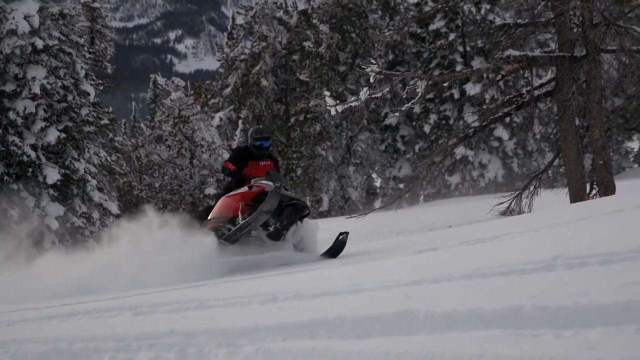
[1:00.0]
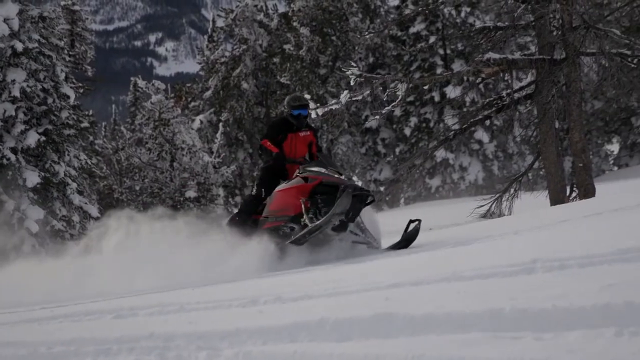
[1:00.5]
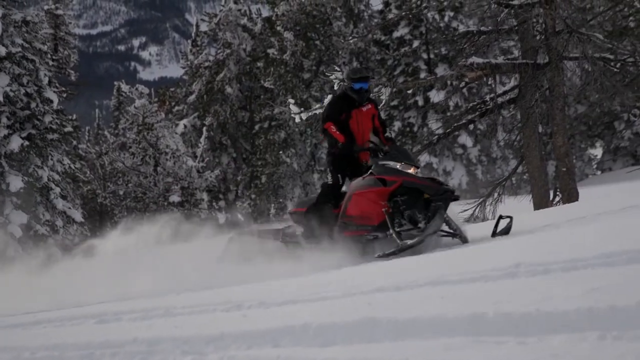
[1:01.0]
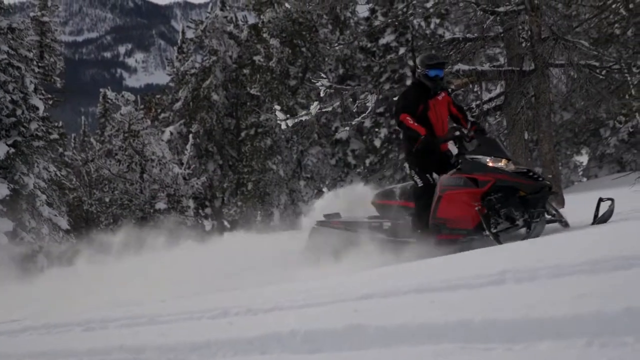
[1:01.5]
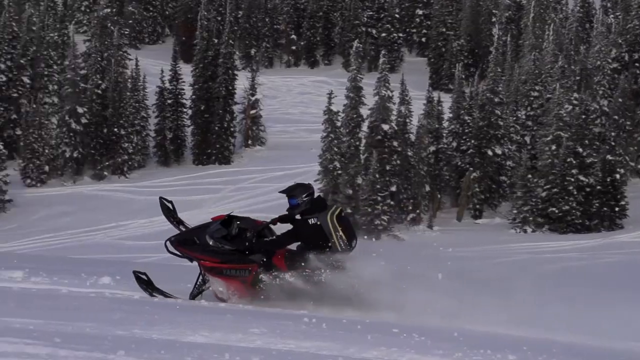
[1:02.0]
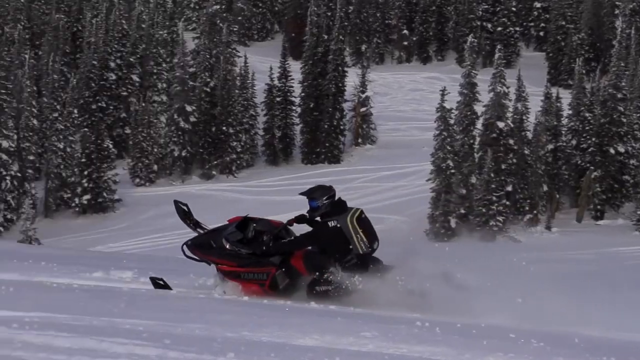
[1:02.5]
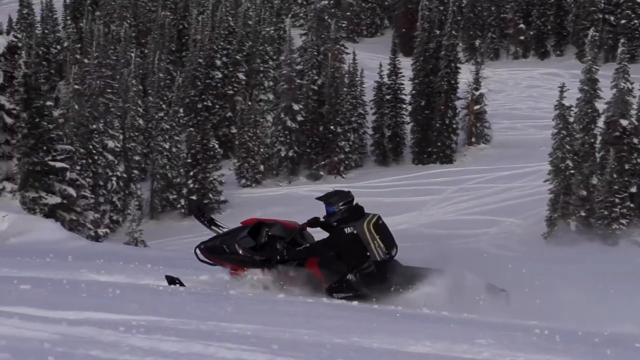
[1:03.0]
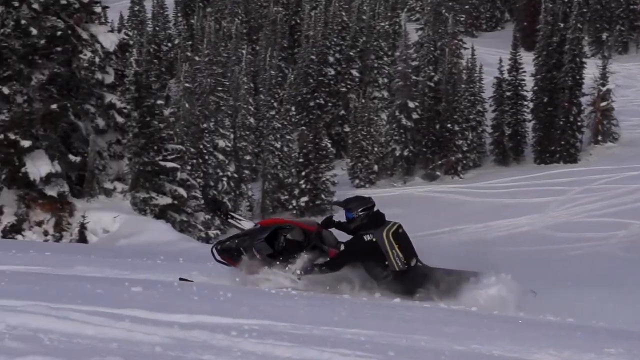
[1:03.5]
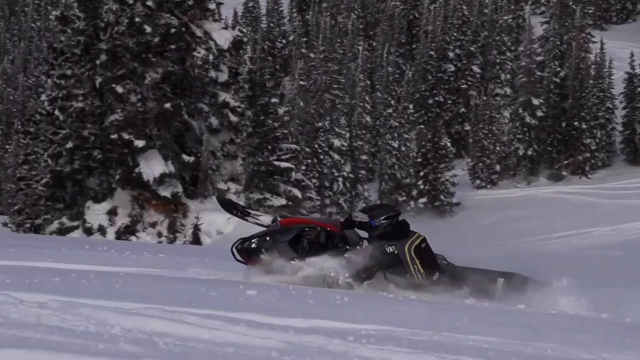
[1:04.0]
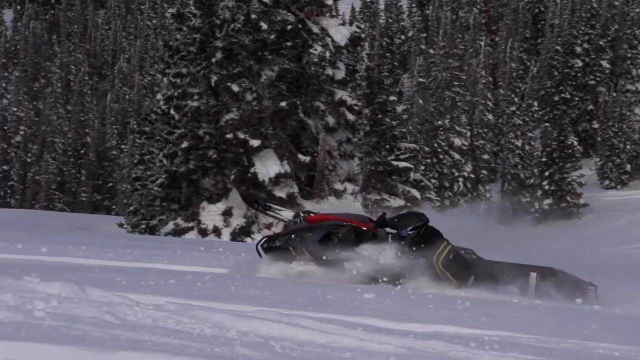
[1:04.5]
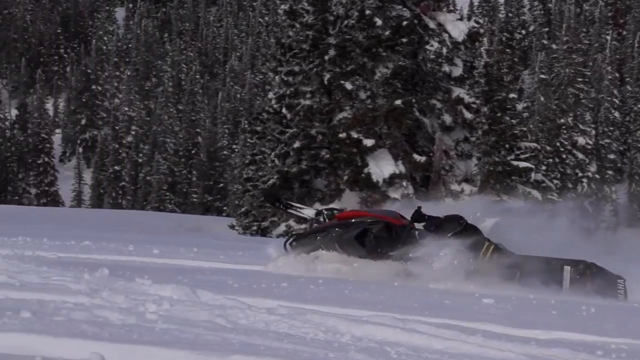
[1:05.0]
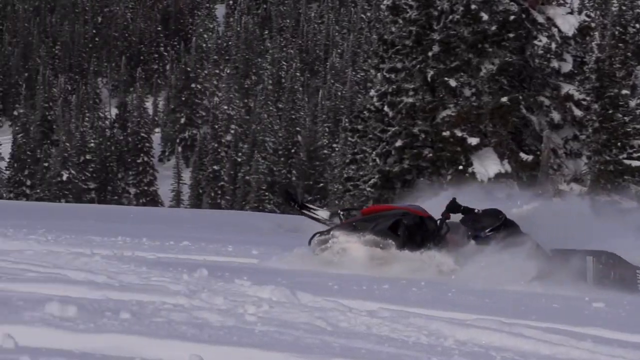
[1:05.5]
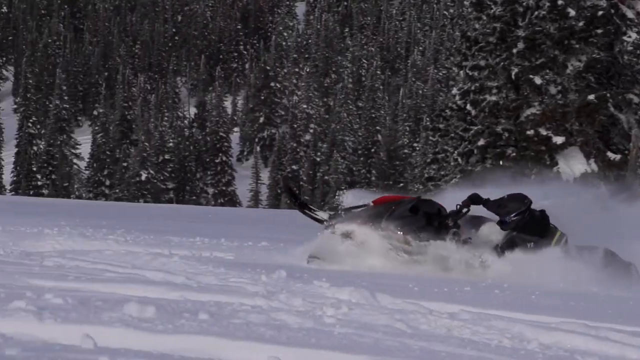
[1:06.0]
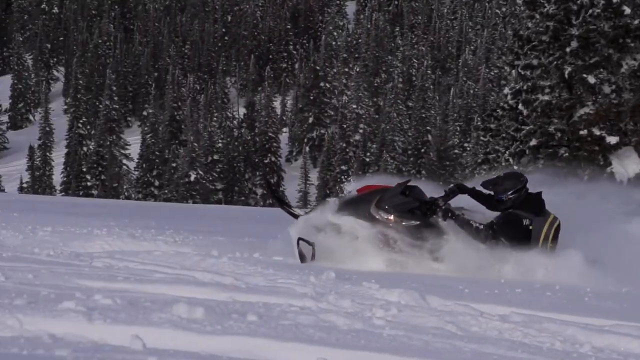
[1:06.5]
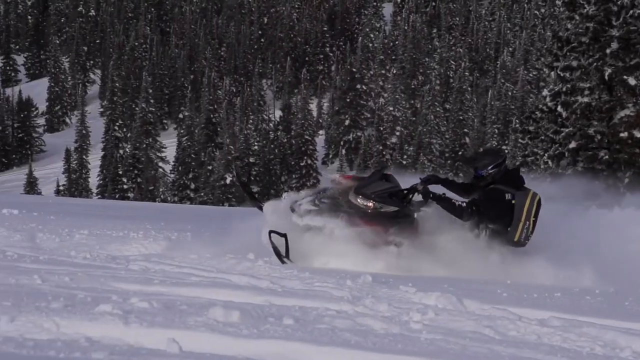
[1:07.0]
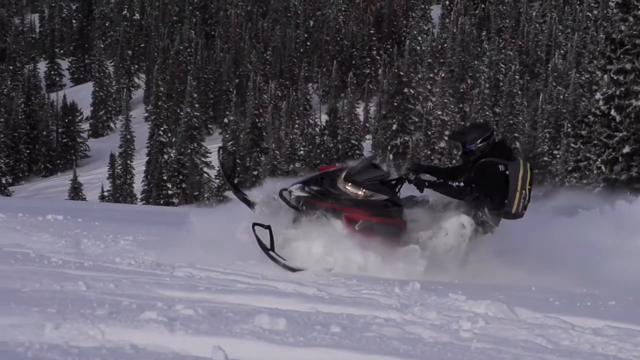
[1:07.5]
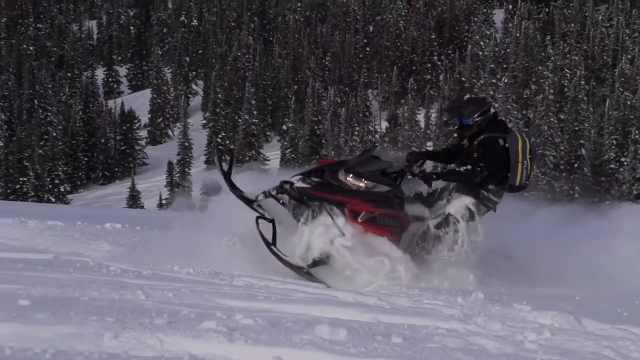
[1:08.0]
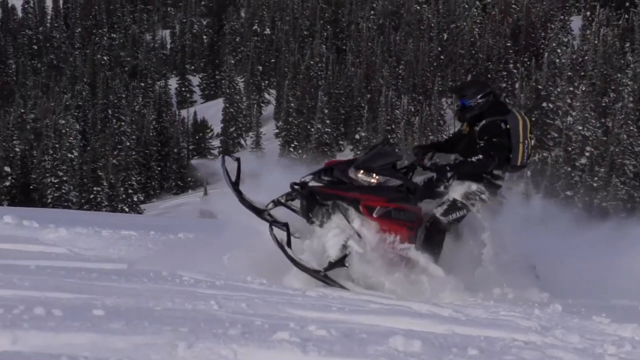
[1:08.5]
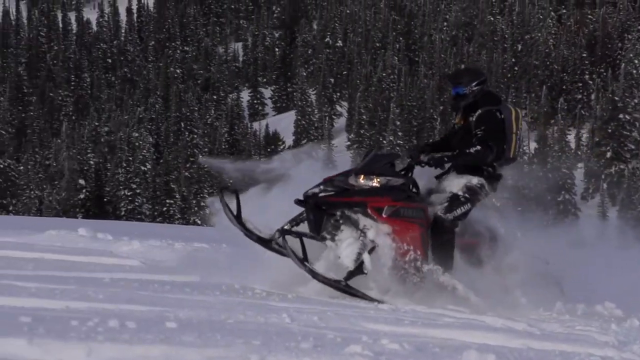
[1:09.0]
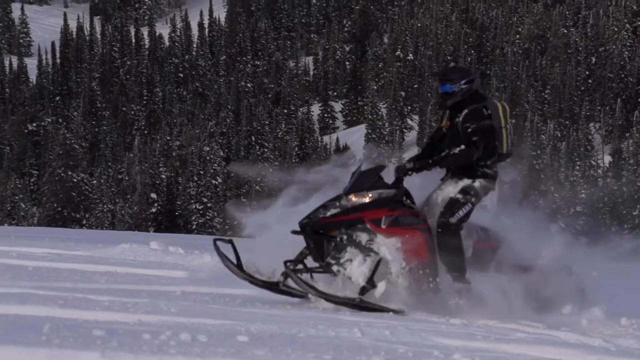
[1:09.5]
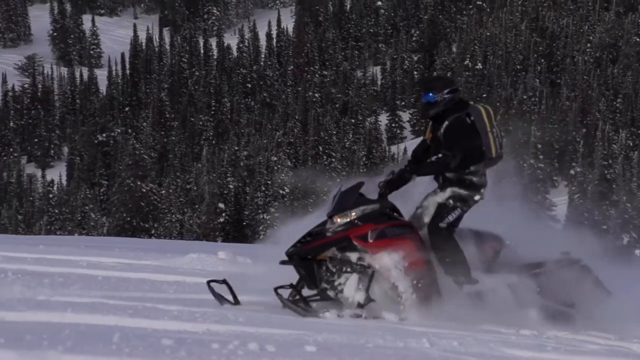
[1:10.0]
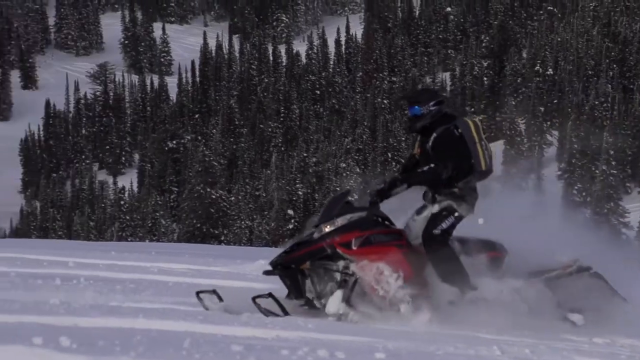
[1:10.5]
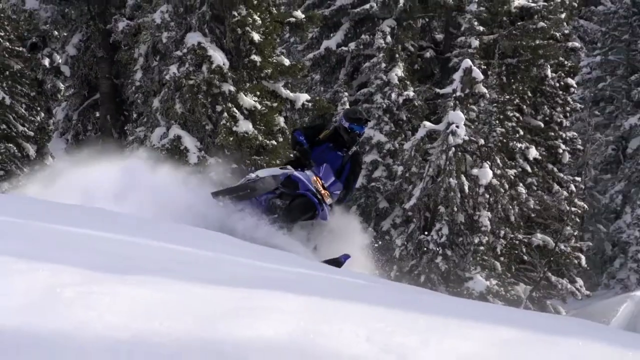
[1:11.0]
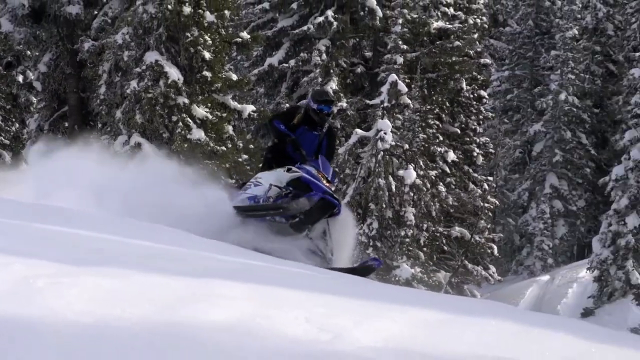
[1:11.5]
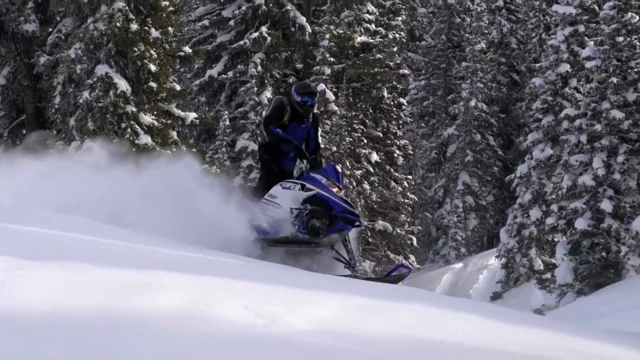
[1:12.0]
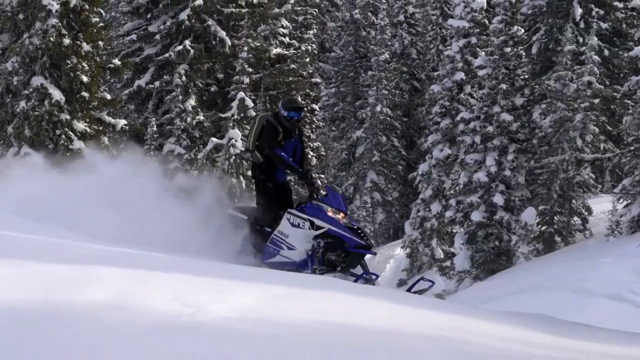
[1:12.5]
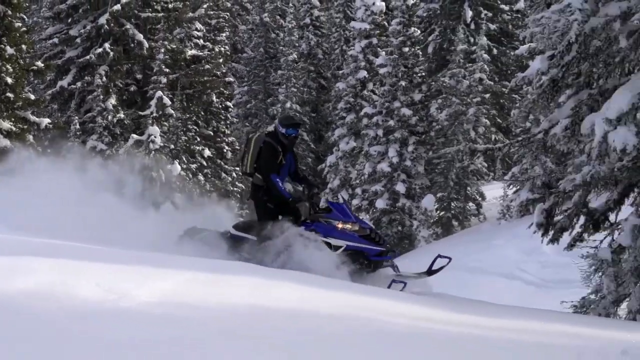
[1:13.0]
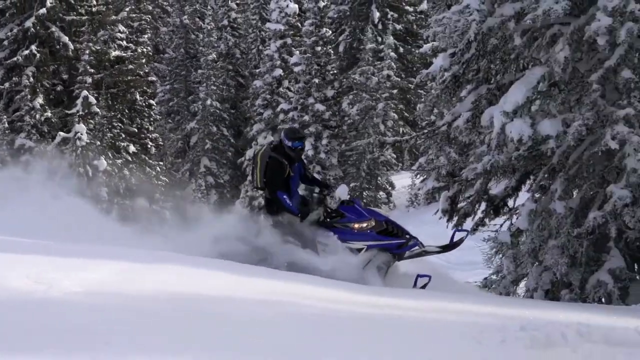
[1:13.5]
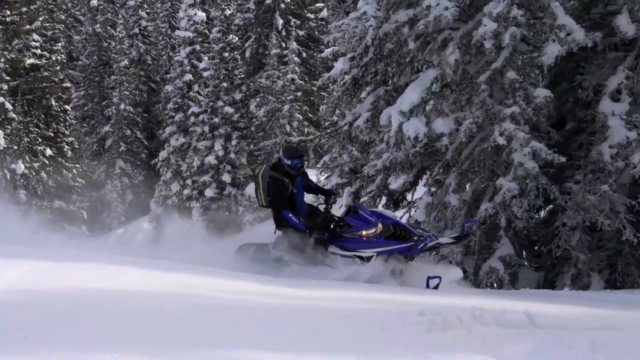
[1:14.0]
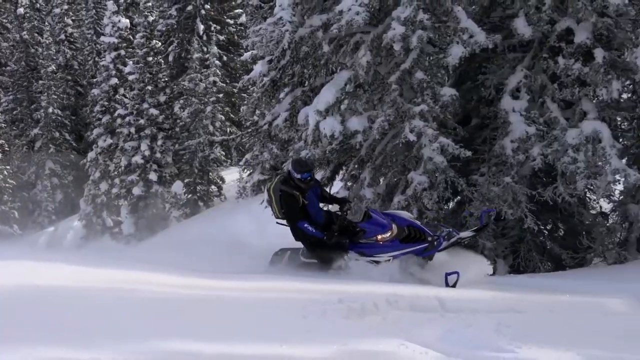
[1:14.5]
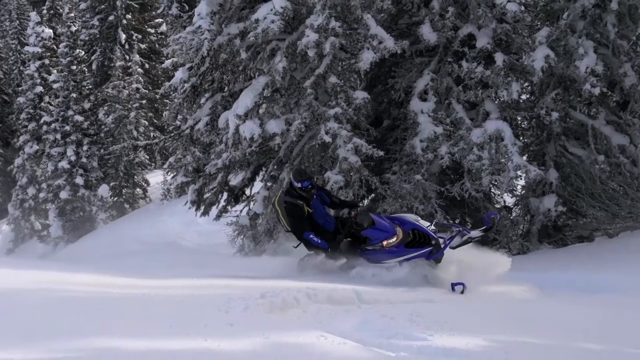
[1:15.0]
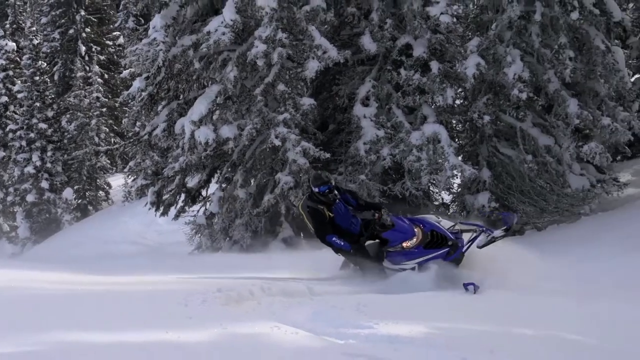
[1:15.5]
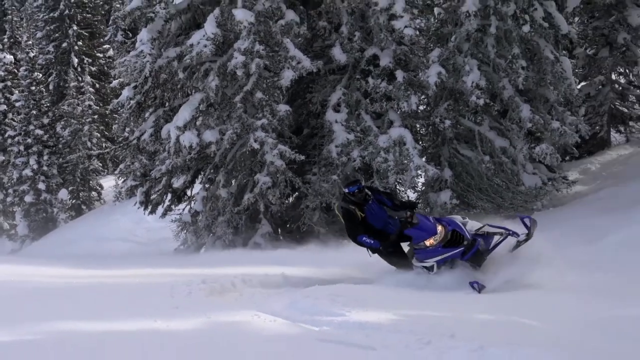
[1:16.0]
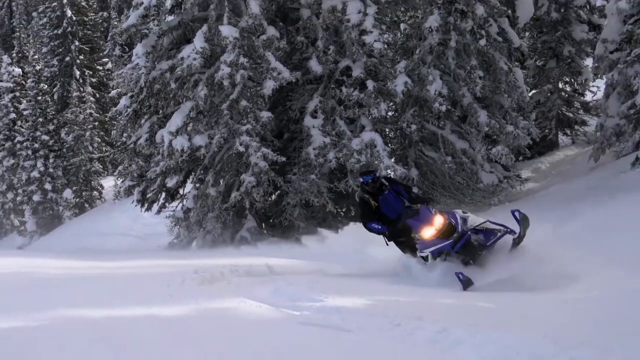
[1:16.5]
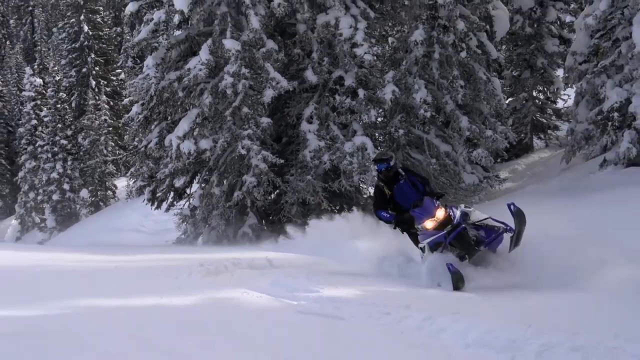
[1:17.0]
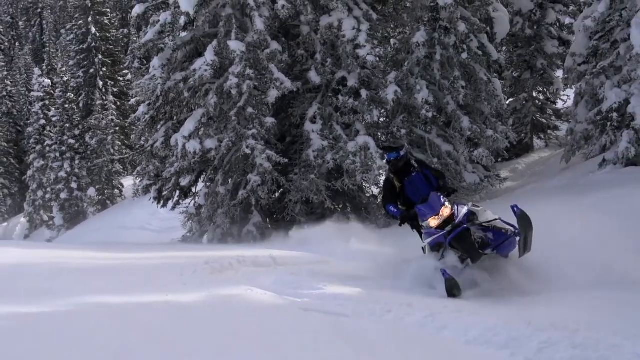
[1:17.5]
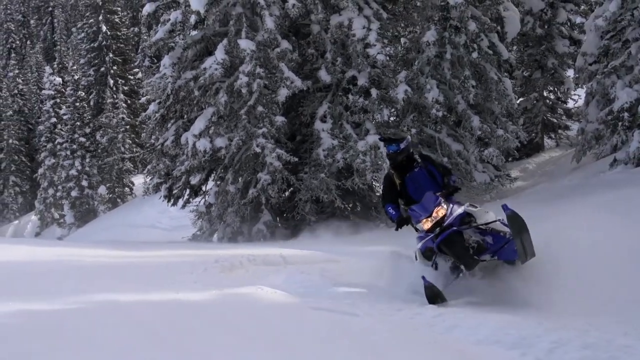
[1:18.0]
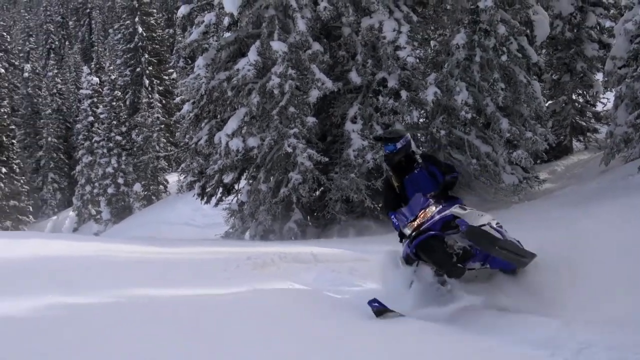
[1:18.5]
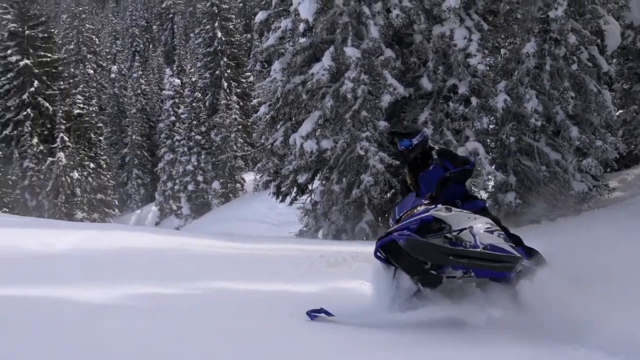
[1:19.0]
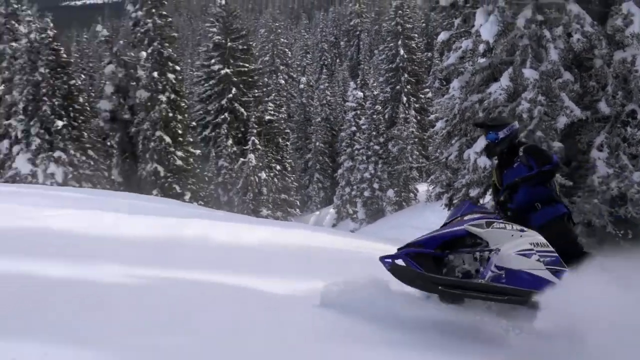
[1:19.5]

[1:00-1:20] A snow-covered mountain or hill, probably a mountain, appears, with many snow-covered evergreen trees in the background. In the foreground is a red snowmobile with black skis on the front. Its rider wears black pants and a black top, both with a little red on them, and appears to wear a black helmet. He wears shades or goggles that look like shades because they seem to block the sun. He rides up the mountain or hill. The rider then does a hard left turn in which half his snowmobile comes off the ground or tilts sideways, disturbing the snow and throwing it up in the air. Lots of evergreen trees cover the whole mountainside or hillside in the background. Next, a blue and white snowmobile is ridden by a rider in black pants, a black top and a black helmet, wearing goggles or shades that look like goggles protecting from sun glare. Pine trees or evergreens are behind him. He makes a hard right turn, and half of his snowmobile comes off the ground as it tilts almost sideways.